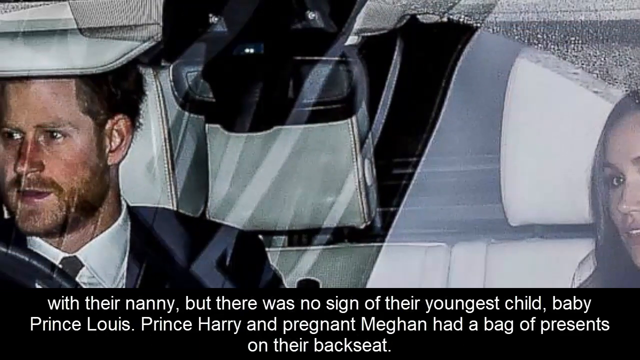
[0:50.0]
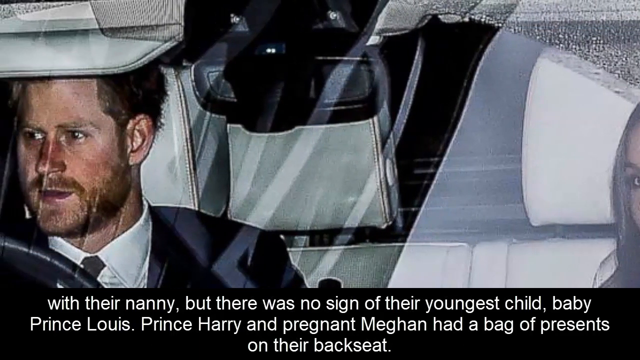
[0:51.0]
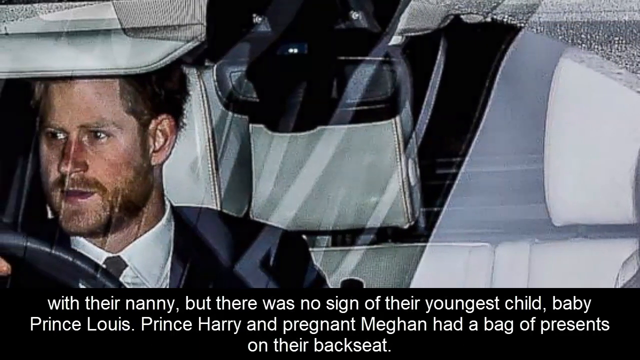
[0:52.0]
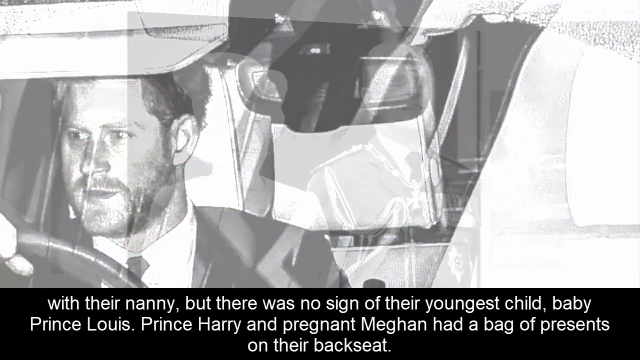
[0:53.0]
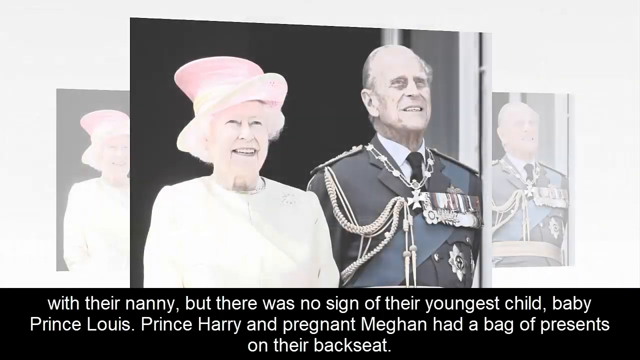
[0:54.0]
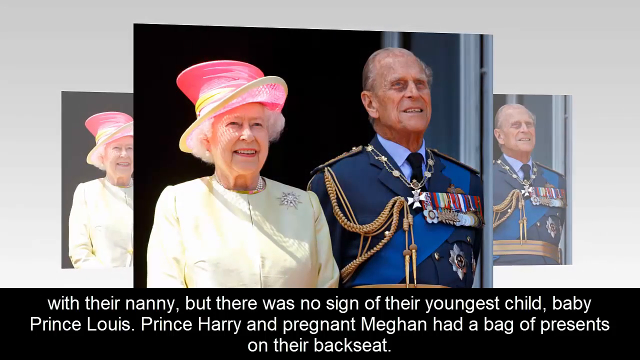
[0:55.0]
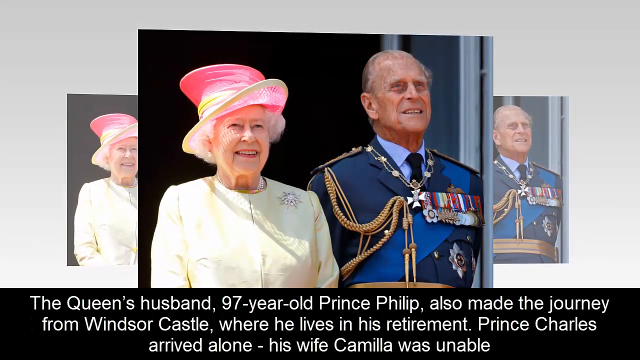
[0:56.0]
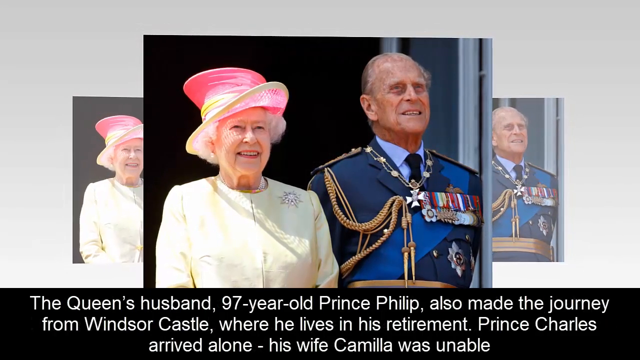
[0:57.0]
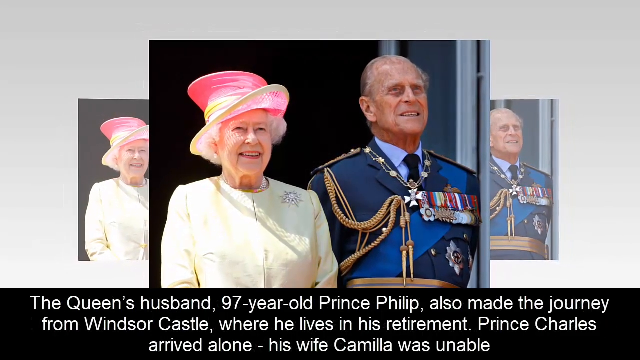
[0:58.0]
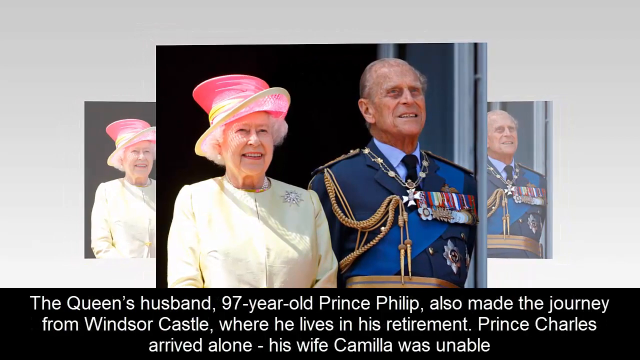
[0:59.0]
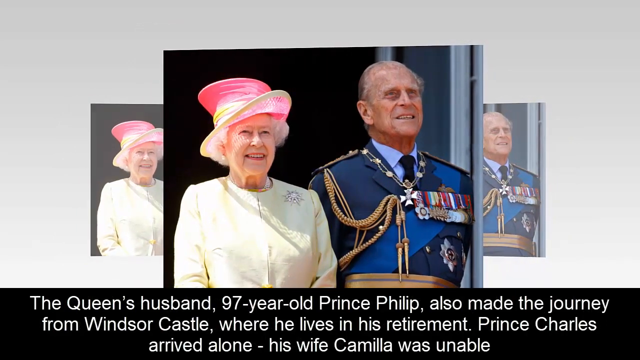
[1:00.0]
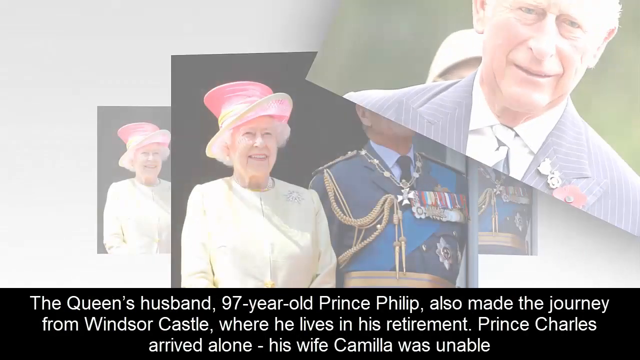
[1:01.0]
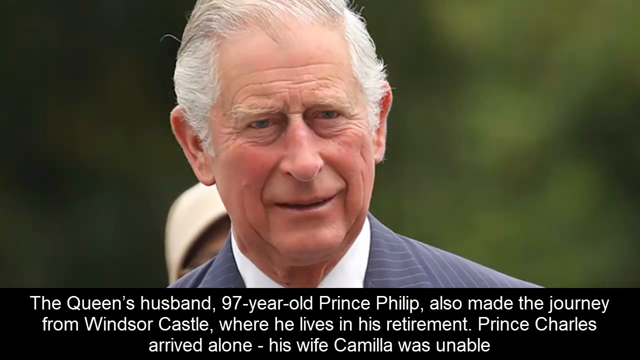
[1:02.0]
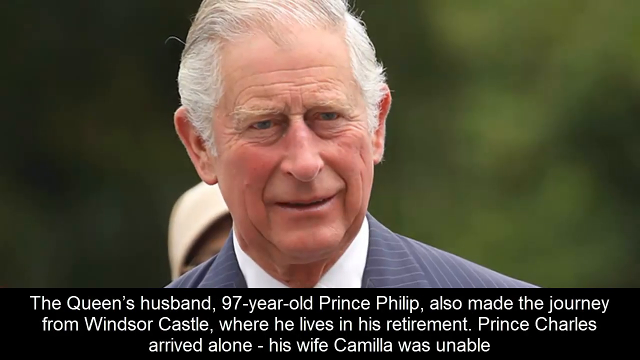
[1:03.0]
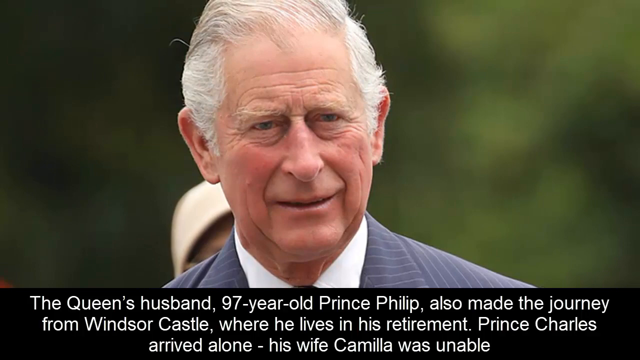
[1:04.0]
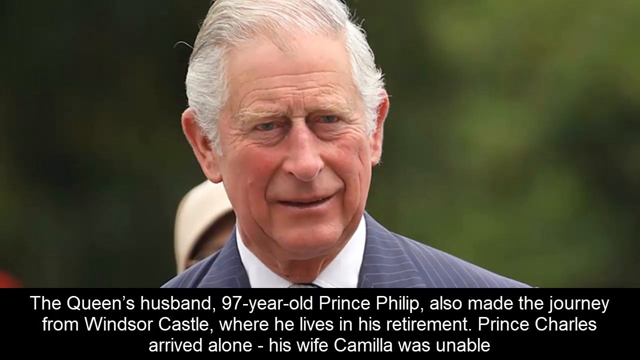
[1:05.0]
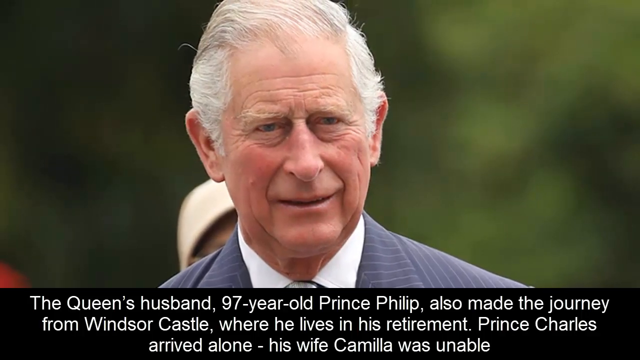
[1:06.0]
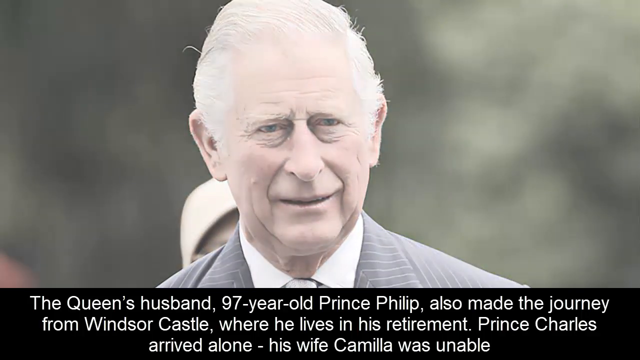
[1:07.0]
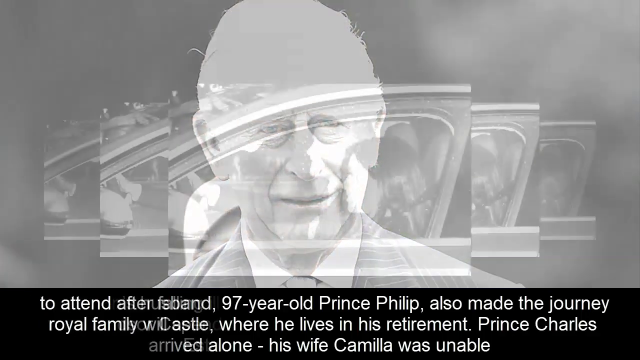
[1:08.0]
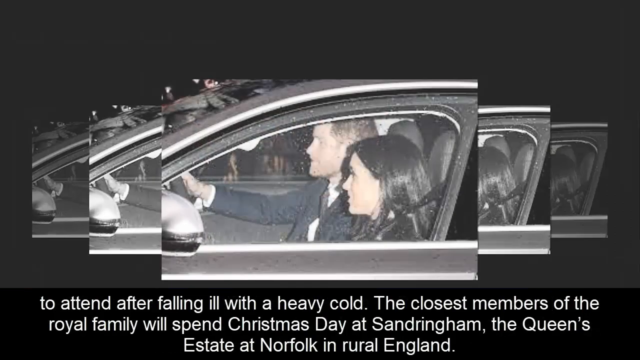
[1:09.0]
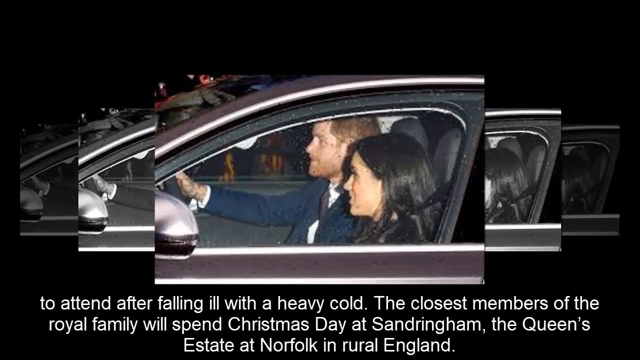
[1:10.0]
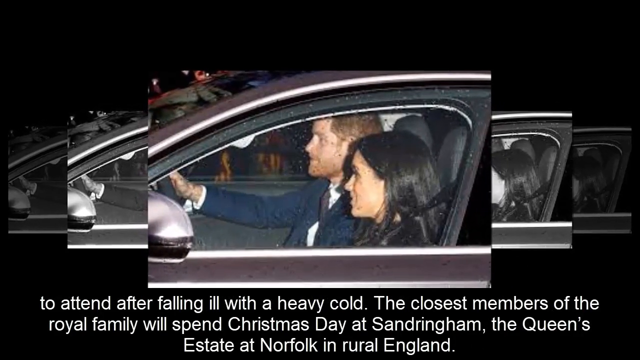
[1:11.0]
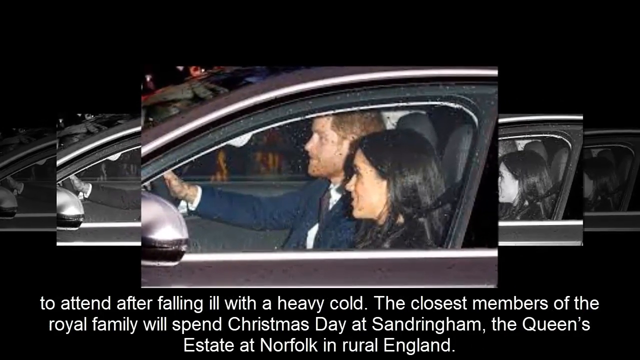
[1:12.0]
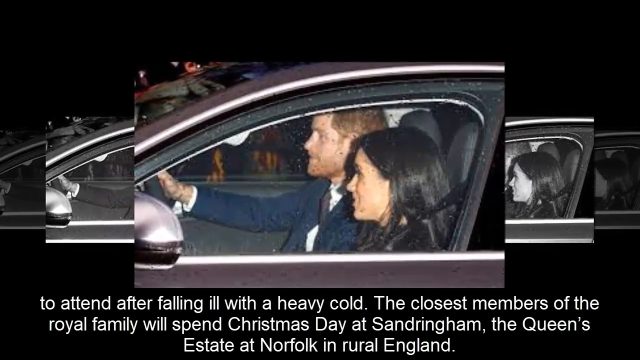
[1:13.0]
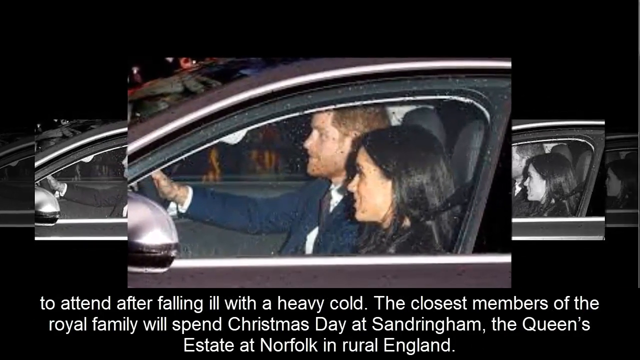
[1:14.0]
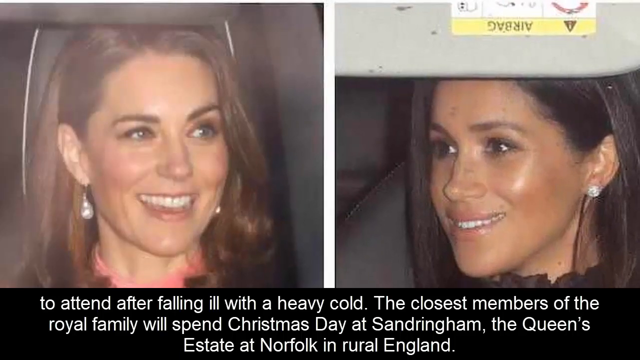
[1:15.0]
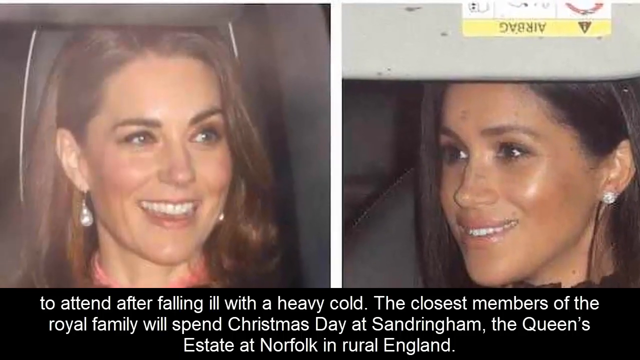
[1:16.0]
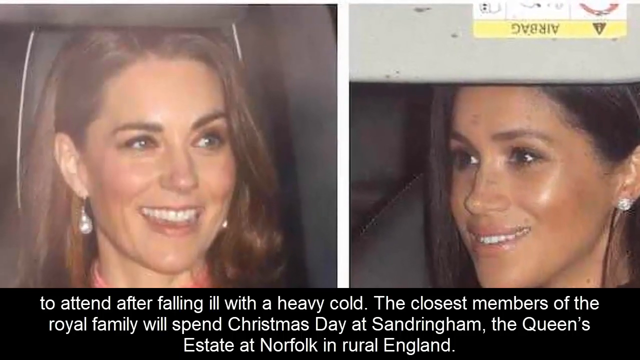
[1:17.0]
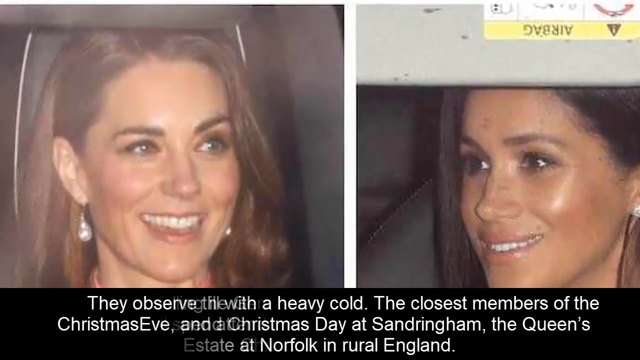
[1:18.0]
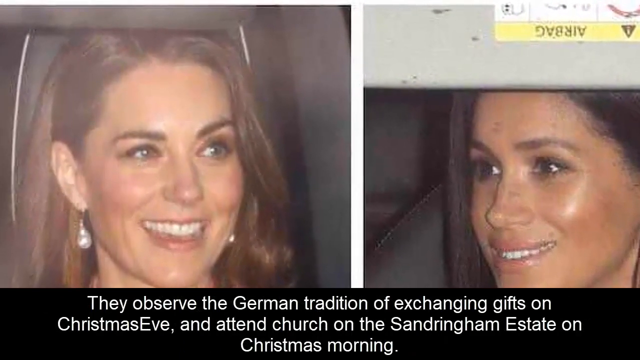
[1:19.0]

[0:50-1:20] An image shows Prince Harry and Meghan in their vehicle, which has white leather seats. Prince Harry wears a black suit and a white shirt and is not focused on the camera, looking to the side. Next comes an image of Prince Philip and Queen Elizabeth in full royal attire, standing in front of what looks like a crowd. More shots of Prince Philip follow, including one of him outside against a blurred green background that is apparently trees; he wears a striped navy blue suit, a white shirt and a navy blue tie. A side view of Meghan and Prince Harry is shown from Meghan's side, followed by another close-up of Meghan's face from the front and the side as a smile appears.